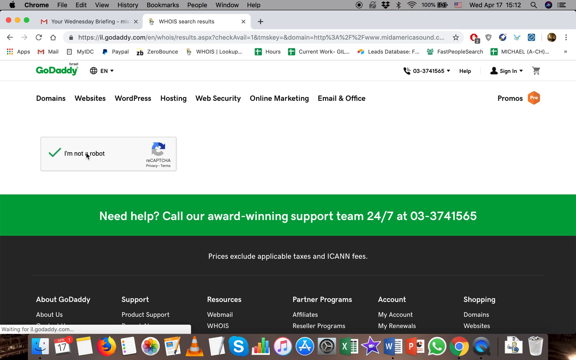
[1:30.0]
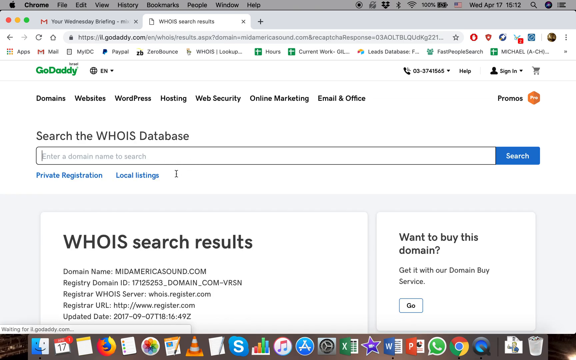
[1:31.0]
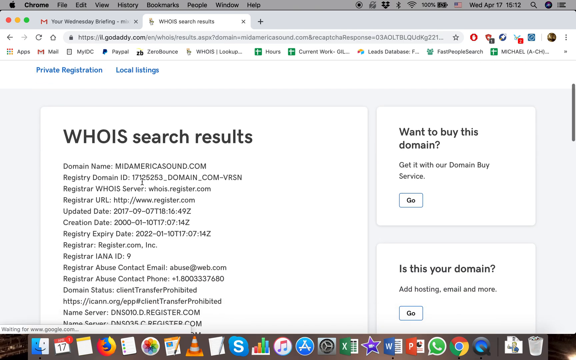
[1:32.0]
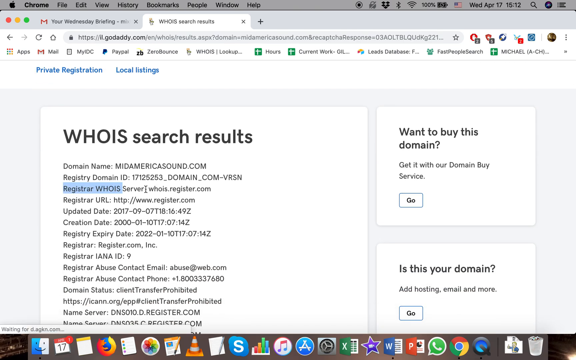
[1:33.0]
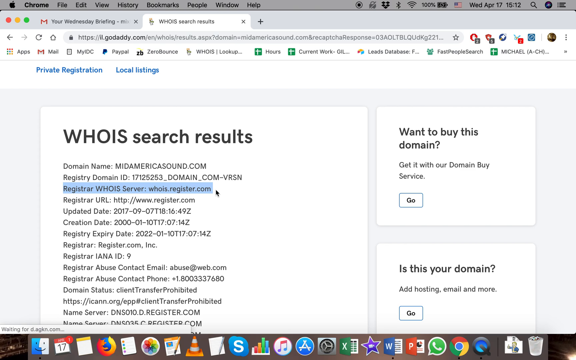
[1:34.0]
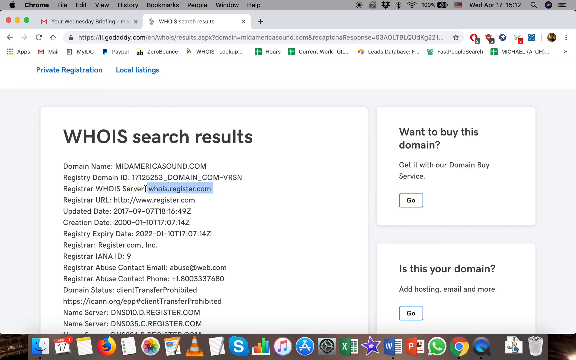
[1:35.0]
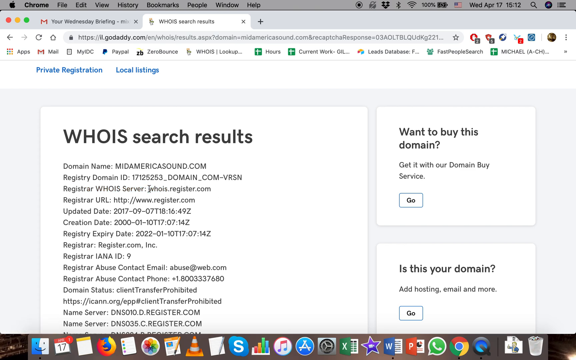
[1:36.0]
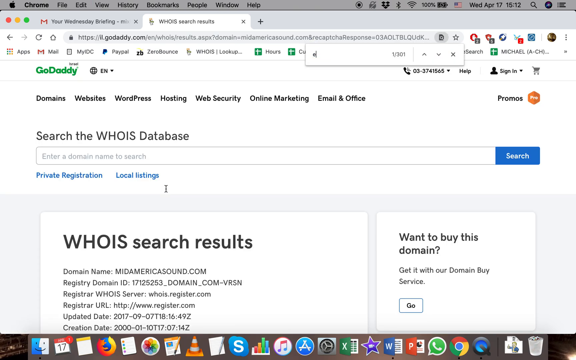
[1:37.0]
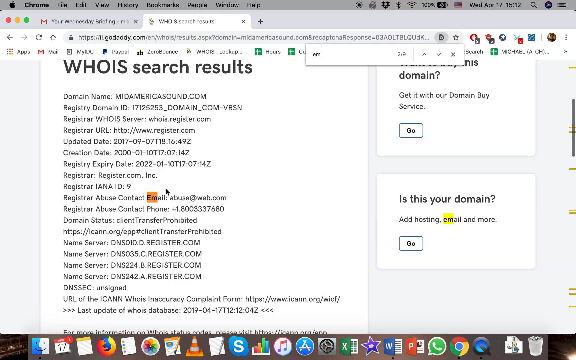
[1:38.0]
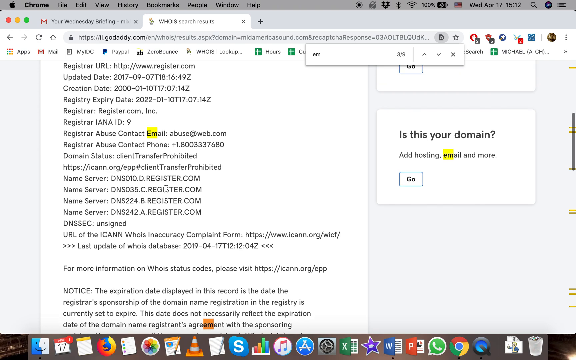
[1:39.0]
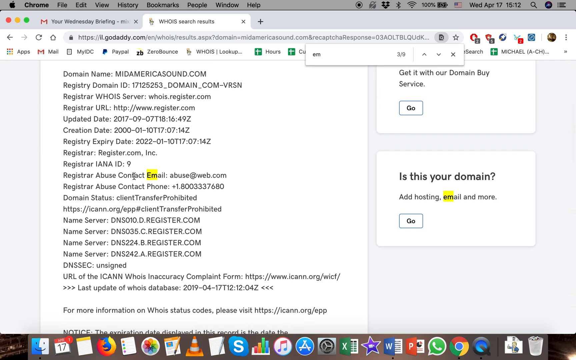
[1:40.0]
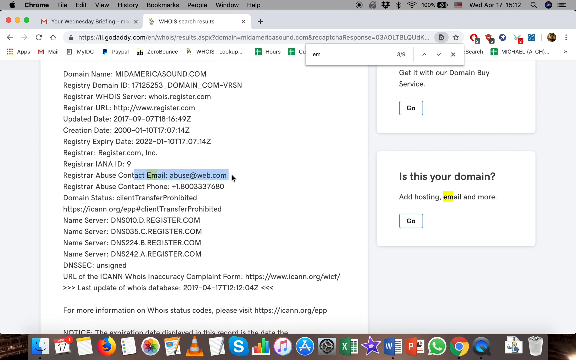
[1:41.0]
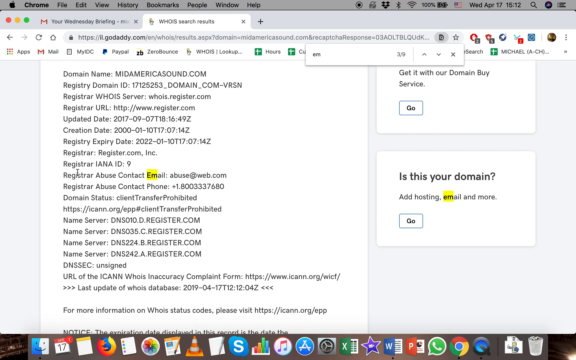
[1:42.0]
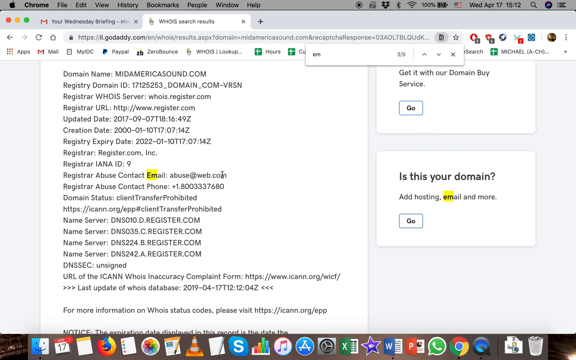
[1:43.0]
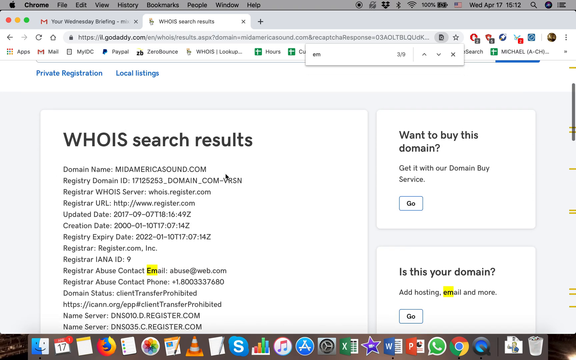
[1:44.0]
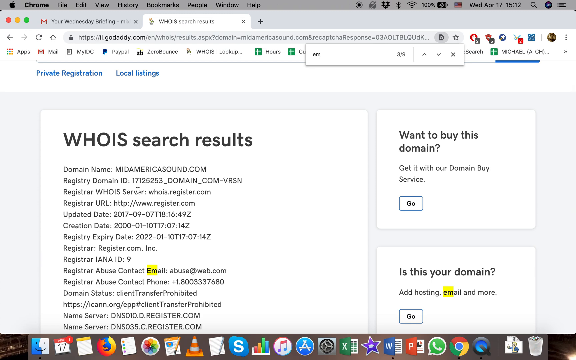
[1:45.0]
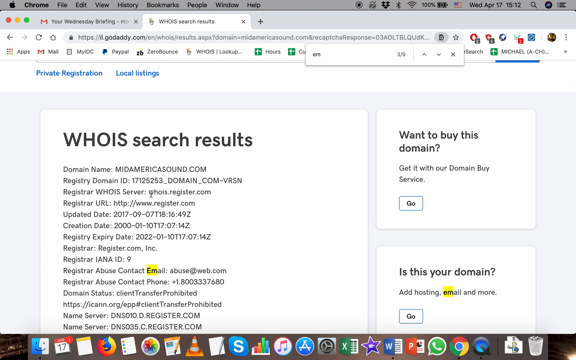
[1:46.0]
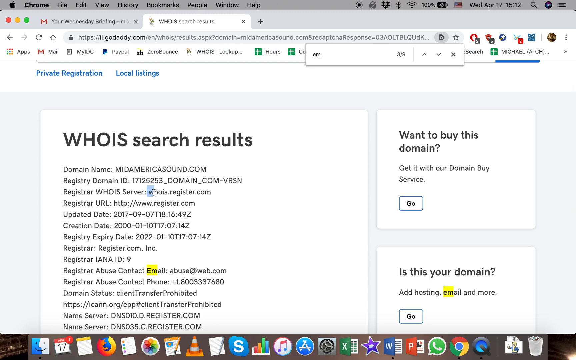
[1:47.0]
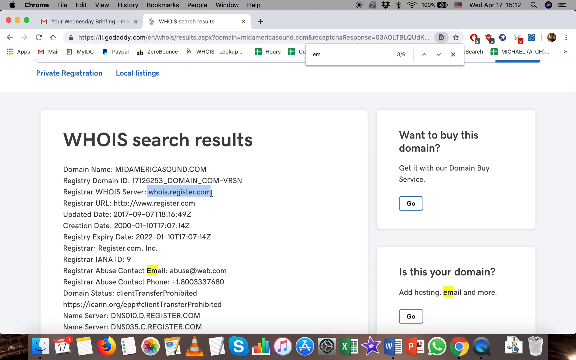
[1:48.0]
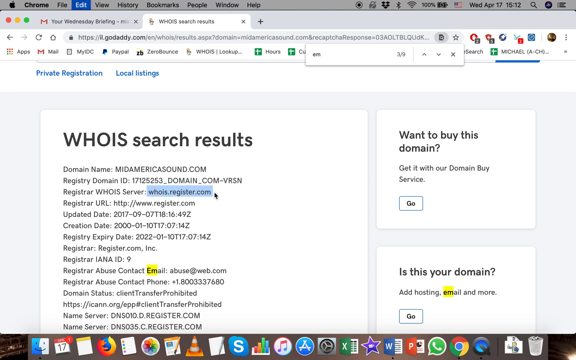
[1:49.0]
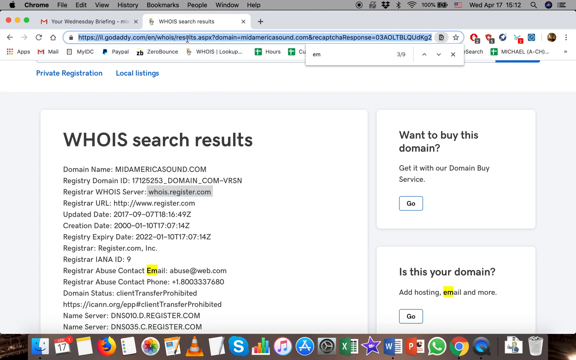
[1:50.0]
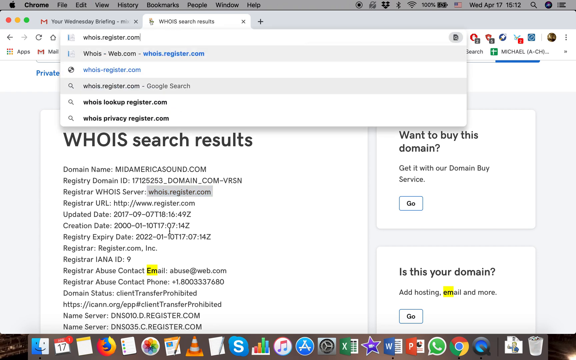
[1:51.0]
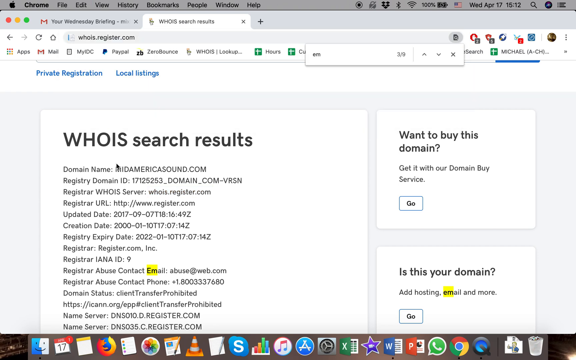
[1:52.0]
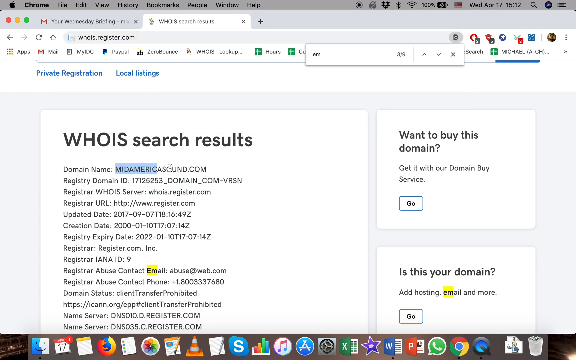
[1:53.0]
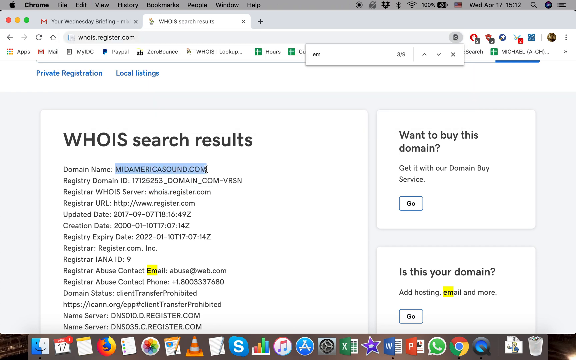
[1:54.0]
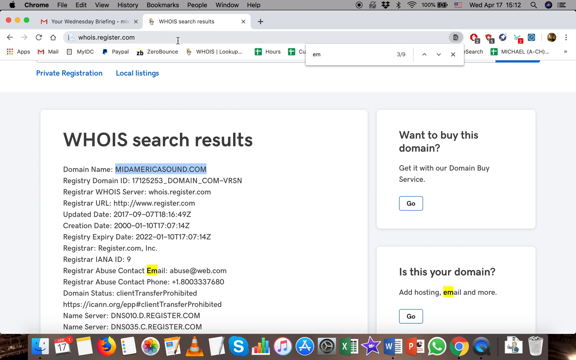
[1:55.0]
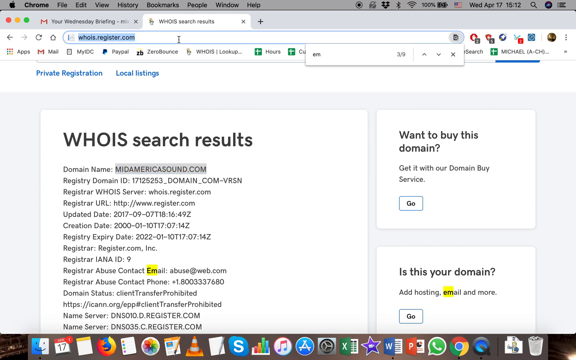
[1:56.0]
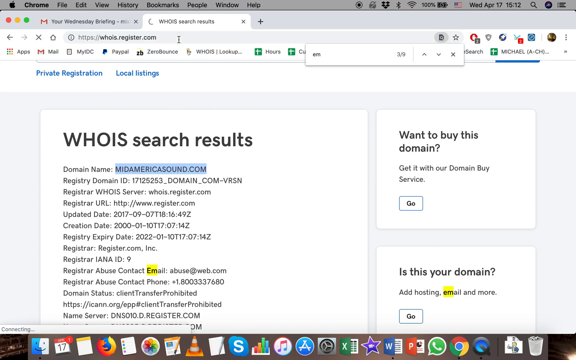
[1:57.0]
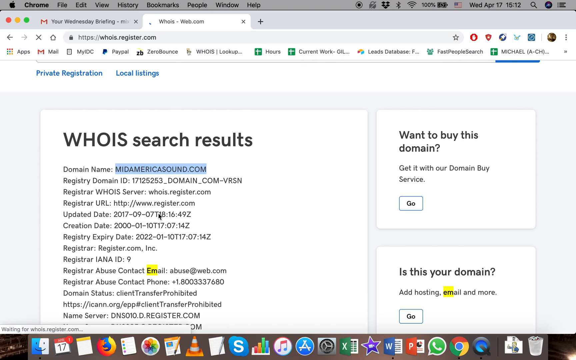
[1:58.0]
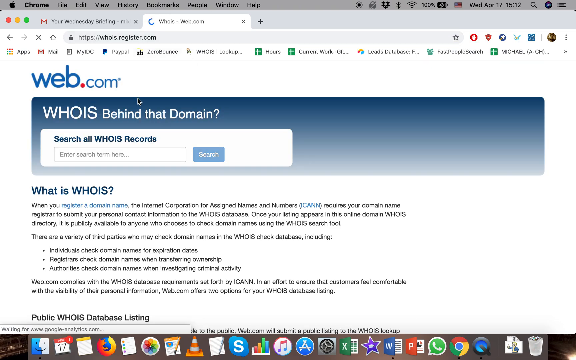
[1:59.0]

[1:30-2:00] After the robot verification, the Whois search results for MidAmerica Sound appear, with the same fields as for the CPA website: register domain, Whois server, register URL, updated date, and so on. The user highlights the register Whois server, copying whois.register.com, and then goes down to the register abuse contact email and highlights it a little. The "em" in email is highlighted because Ctrl-F is still active; this time the Ctrl-F search starts from the bottom, and the user has to scroll up to find the email. They go to whois.register.com and paste the domain name into it to search again.